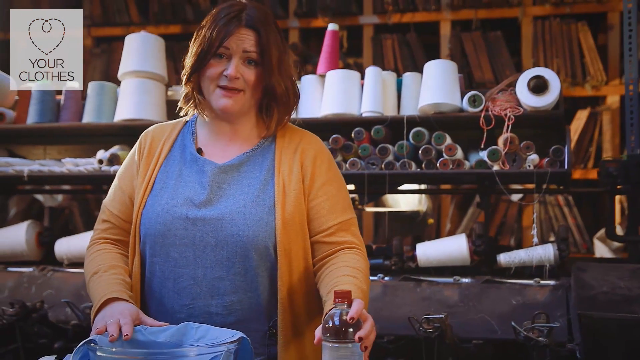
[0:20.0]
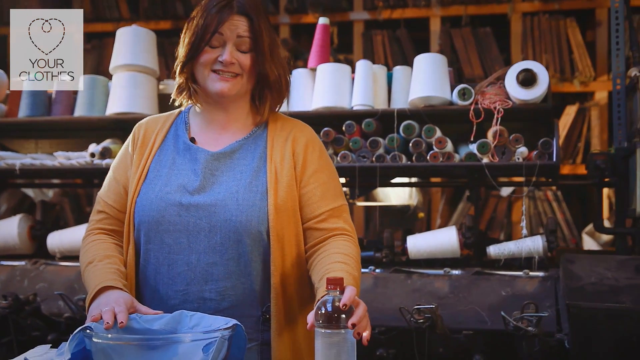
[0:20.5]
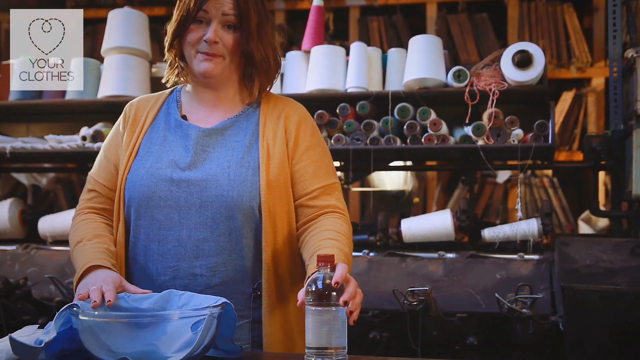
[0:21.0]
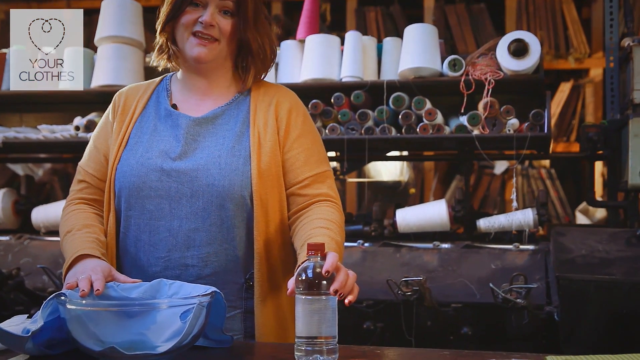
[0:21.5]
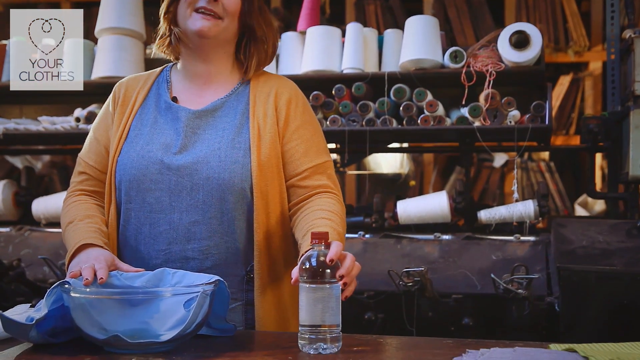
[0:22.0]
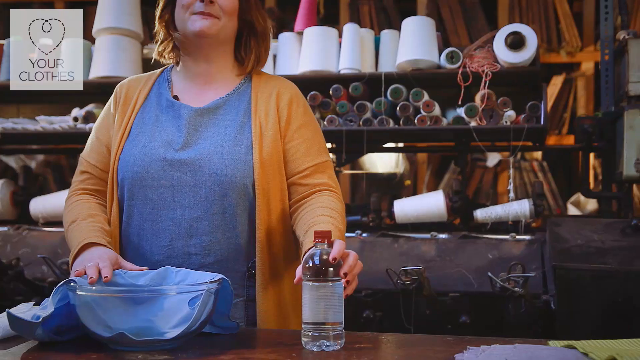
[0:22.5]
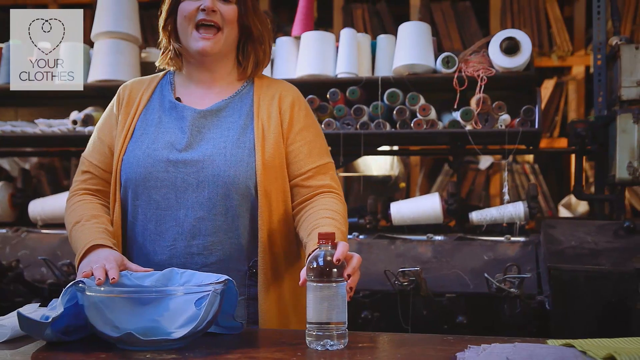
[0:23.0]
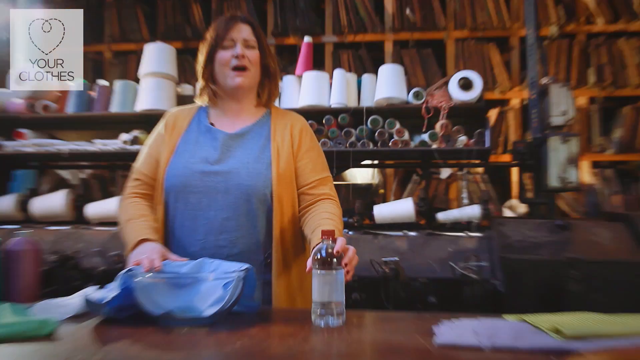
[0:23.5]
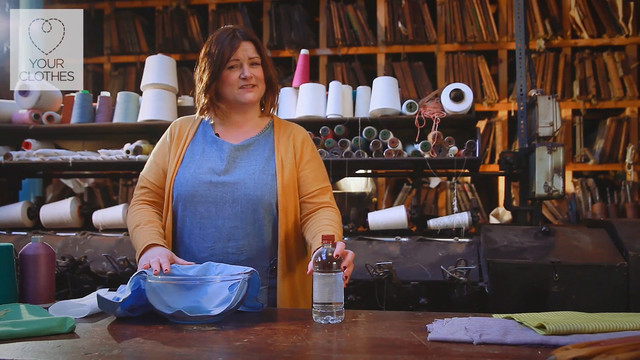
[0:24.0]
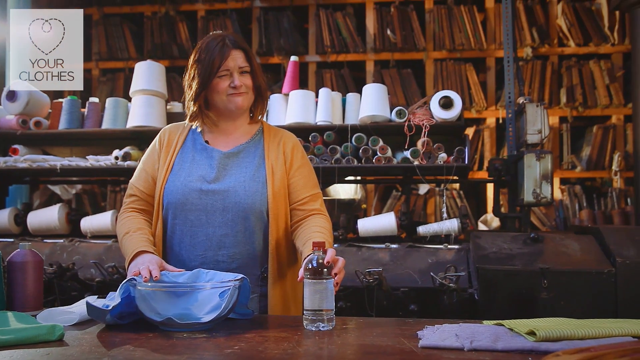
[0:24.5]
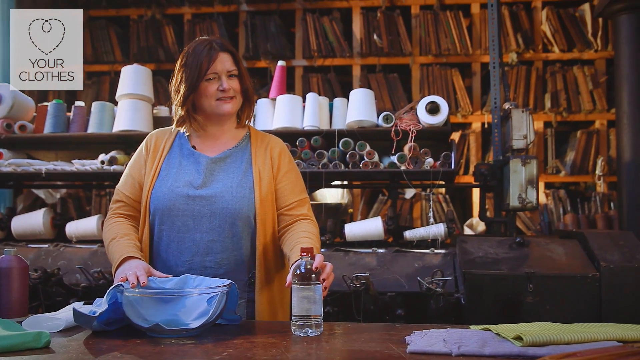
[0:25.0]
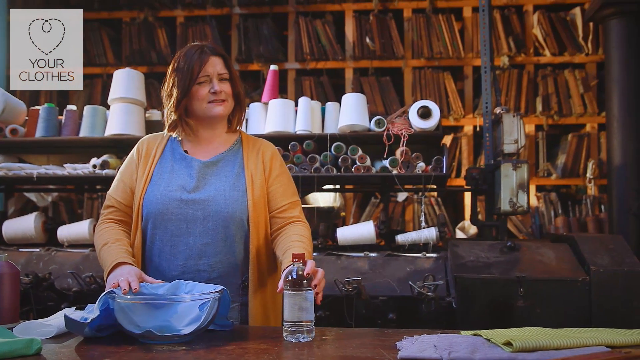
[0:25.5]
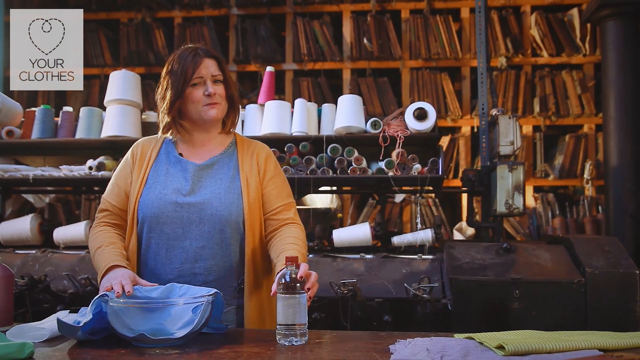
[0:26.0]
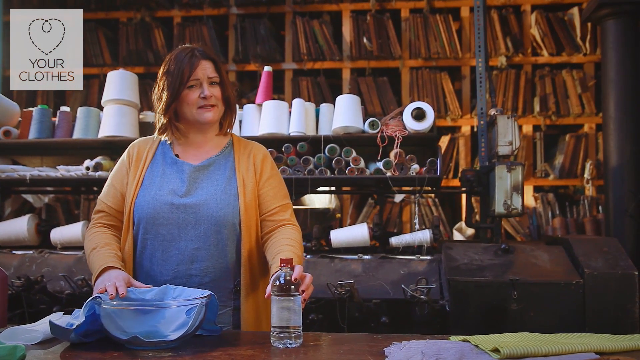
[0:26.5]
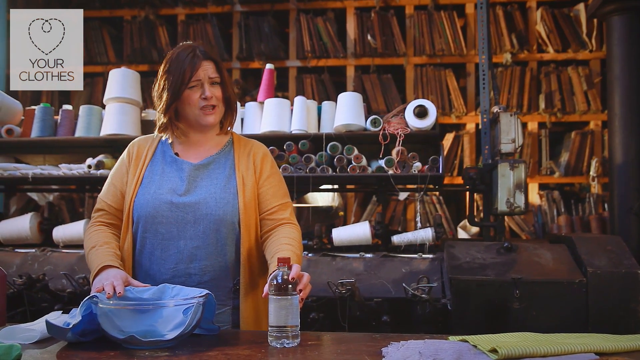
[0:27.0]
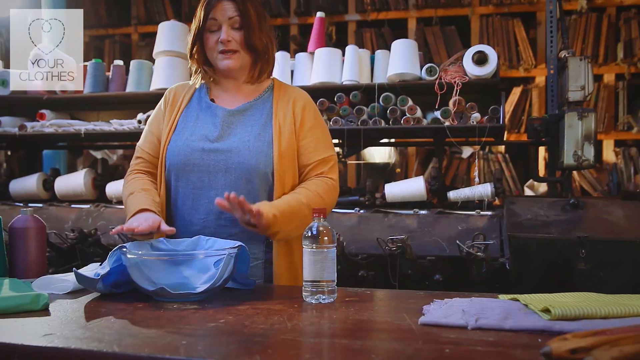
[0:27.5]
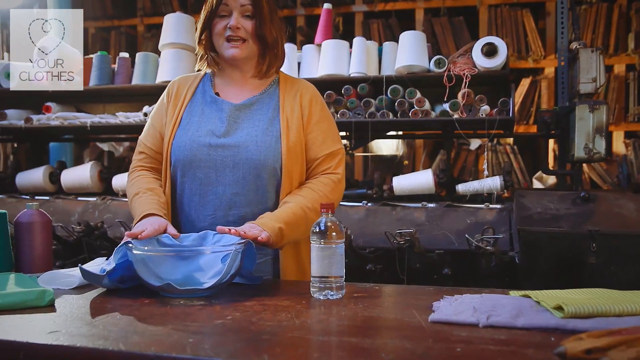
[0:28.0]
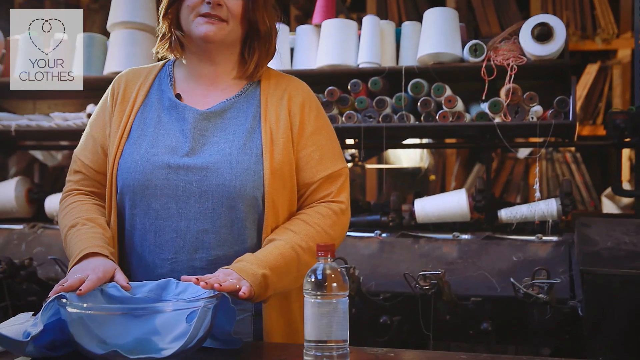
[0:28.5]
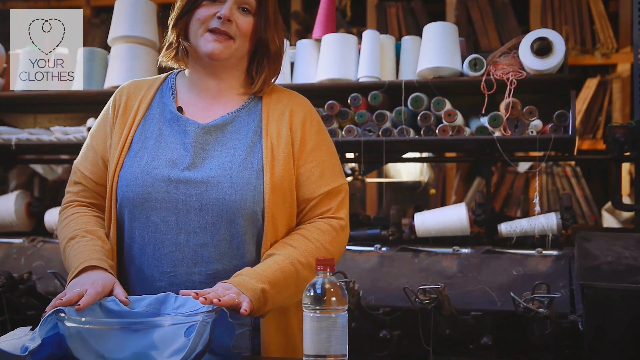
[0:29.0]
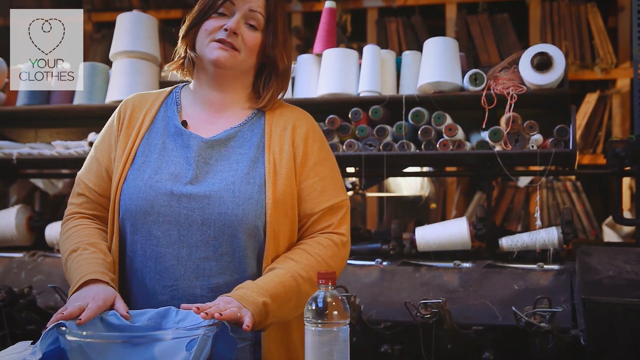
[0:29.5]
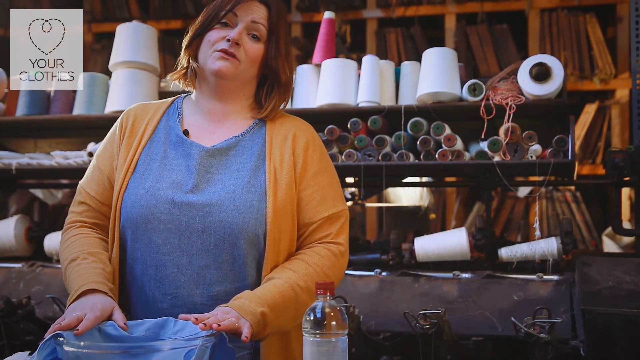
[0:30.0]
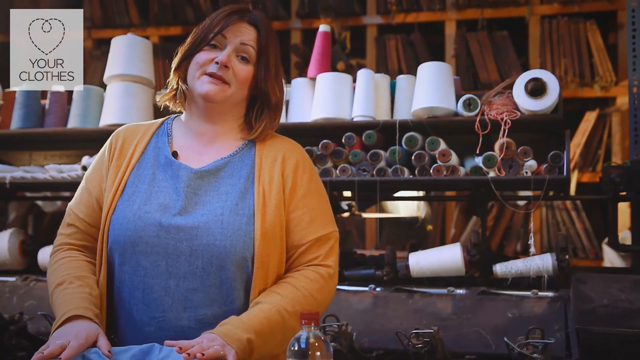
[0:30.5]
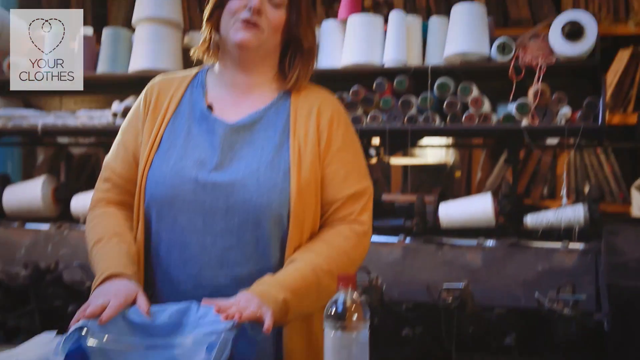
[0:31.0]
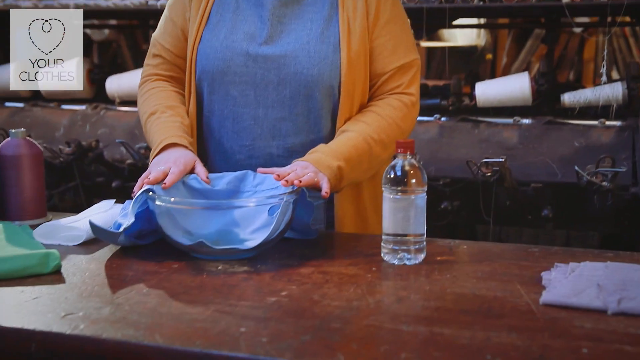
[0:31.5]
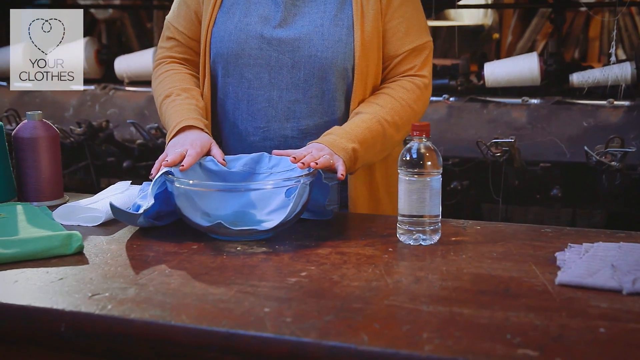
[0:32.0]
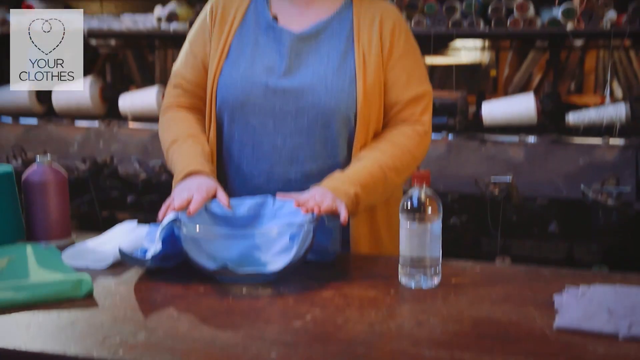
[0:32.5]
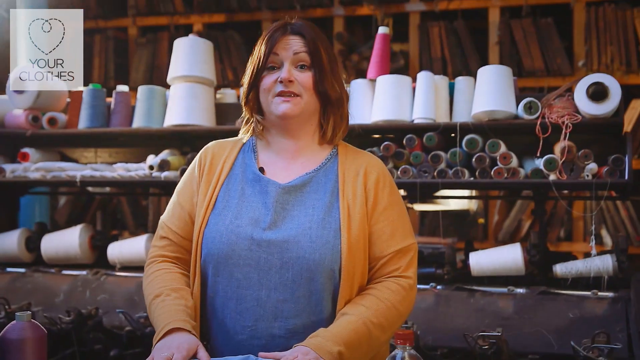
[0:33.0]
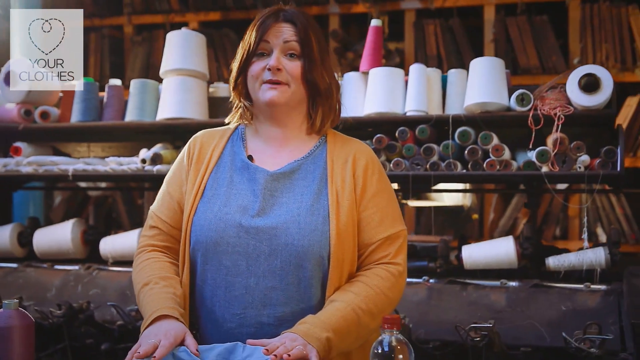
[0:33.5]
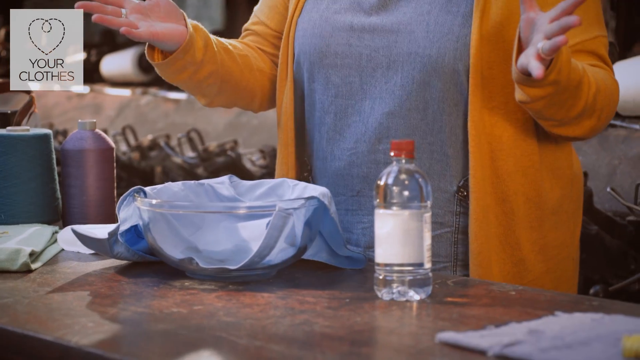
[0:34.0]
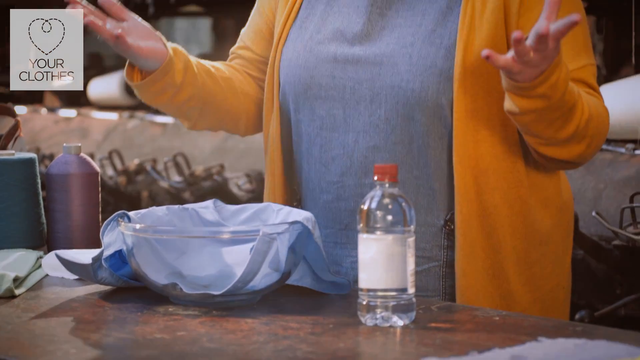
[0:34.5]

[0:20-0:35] A woman speaks toward the camera. Behind her are various spools of yarn and different materials, as though in a textile shop. In front of her is a wooden-topped table with various cloths laid out on it. A blue cloth is draped over a clear bowl, and beside it is a bottle of clear liquid with no label and a red cap. She has her hands on the bottle and the bowl, moving them back and forth between the two as she talks expressively. She wears a darker yellow long-sleeved sweater with a blue top underneath and has roughly shoulder-length brown hair. The camera angles keep shifting. In the upper left-hand corner is a logo with the words "Your Clothes" underneath it, in a white text box.